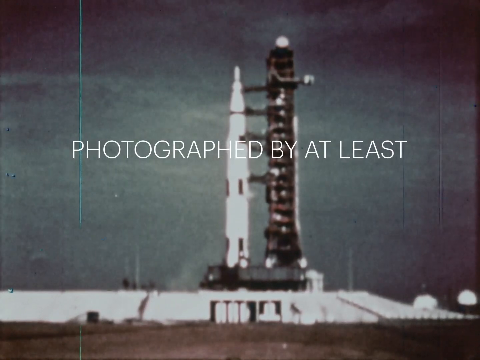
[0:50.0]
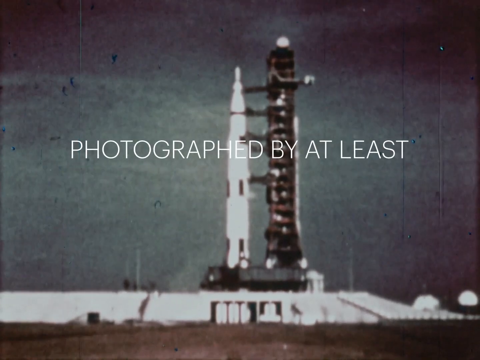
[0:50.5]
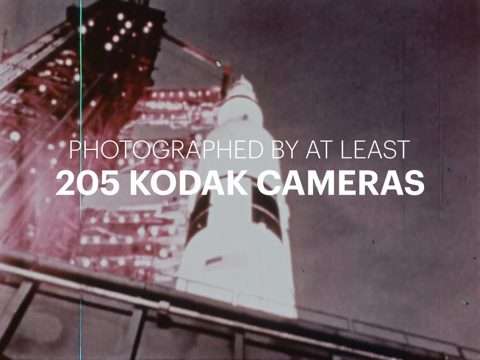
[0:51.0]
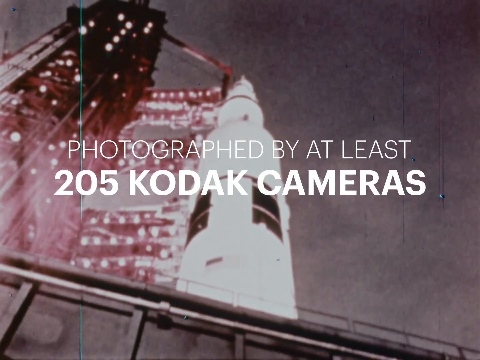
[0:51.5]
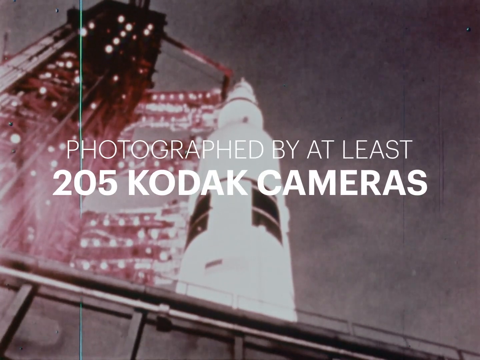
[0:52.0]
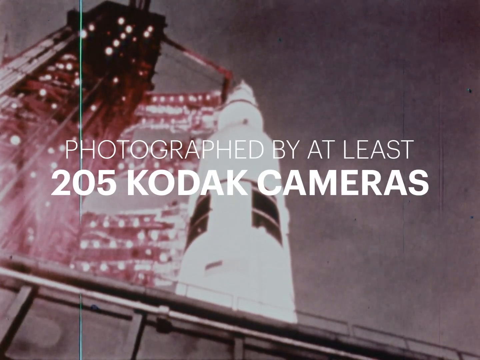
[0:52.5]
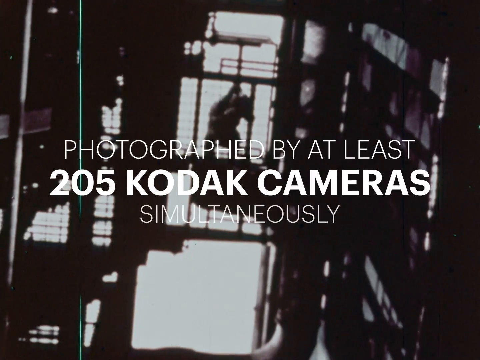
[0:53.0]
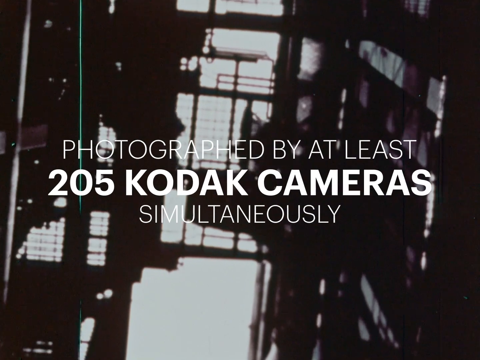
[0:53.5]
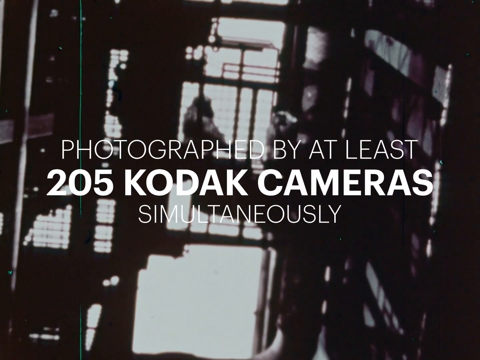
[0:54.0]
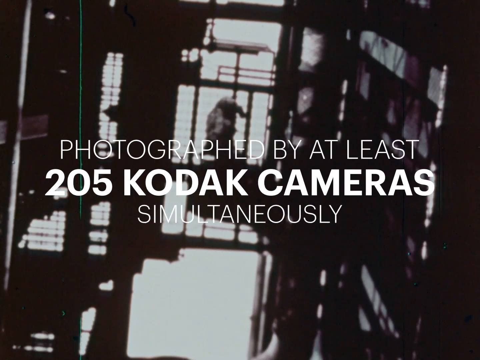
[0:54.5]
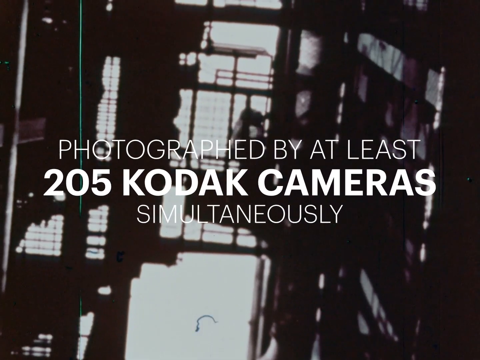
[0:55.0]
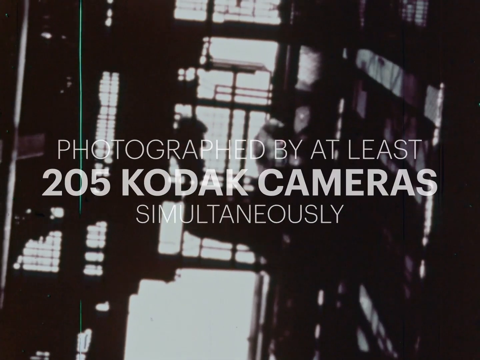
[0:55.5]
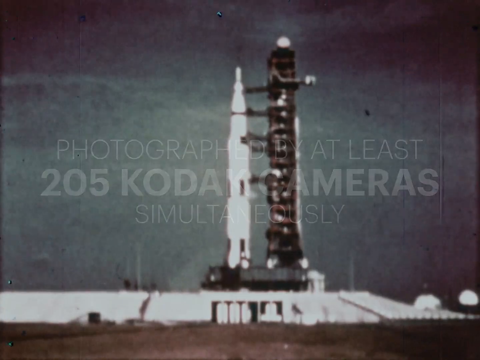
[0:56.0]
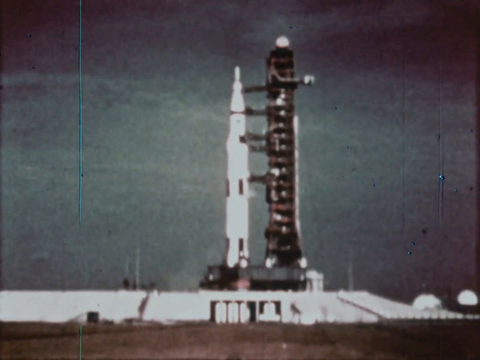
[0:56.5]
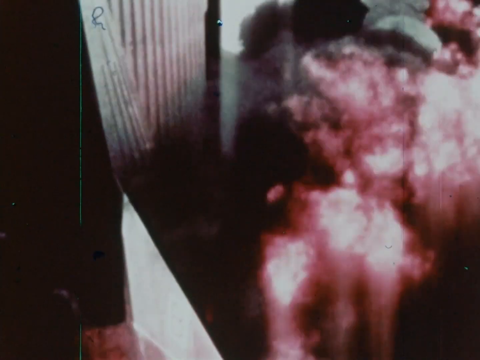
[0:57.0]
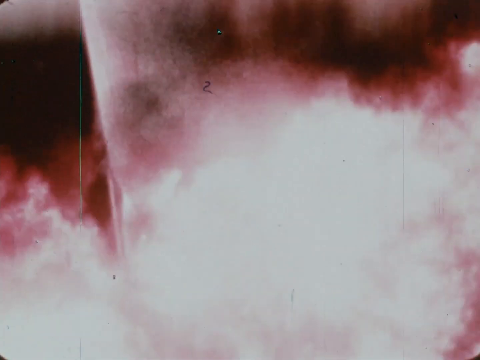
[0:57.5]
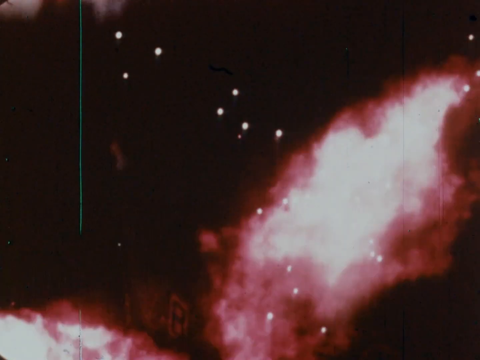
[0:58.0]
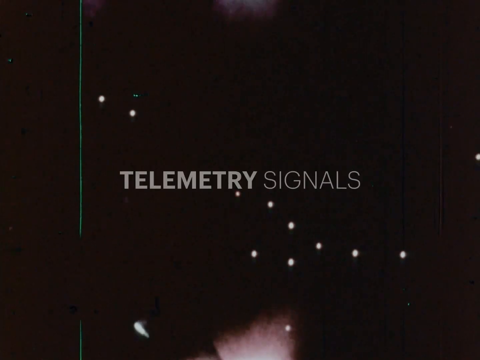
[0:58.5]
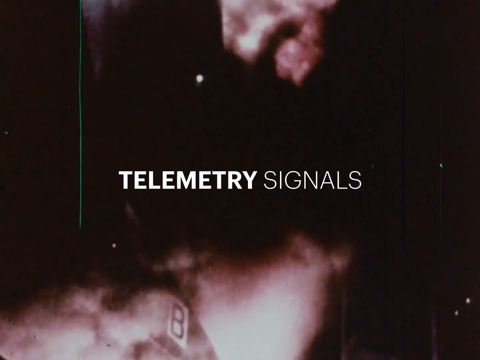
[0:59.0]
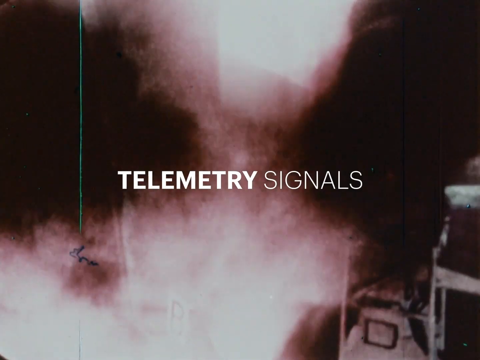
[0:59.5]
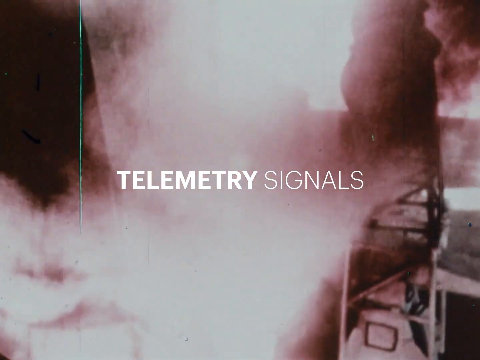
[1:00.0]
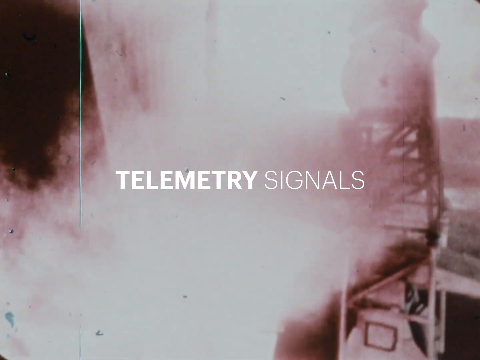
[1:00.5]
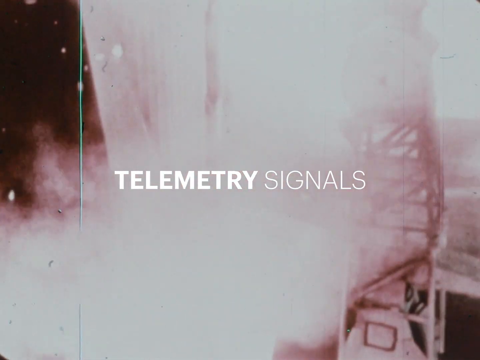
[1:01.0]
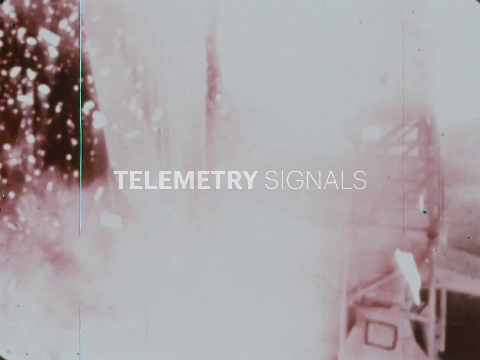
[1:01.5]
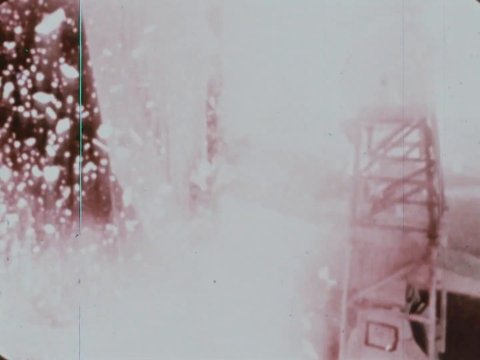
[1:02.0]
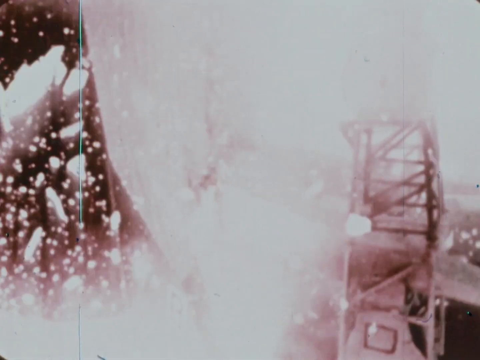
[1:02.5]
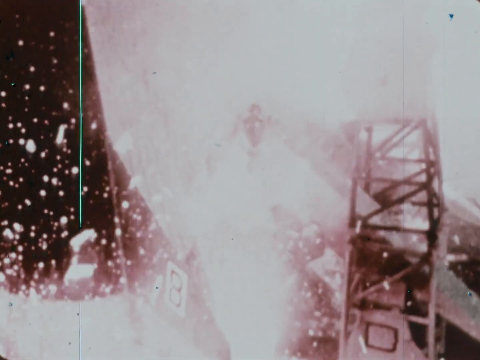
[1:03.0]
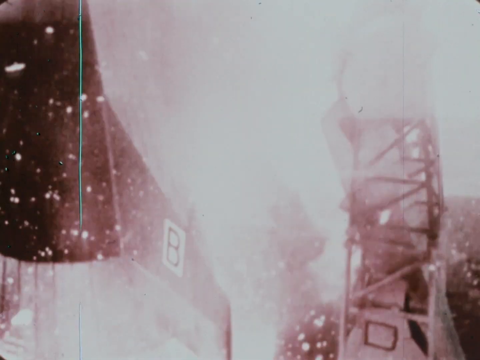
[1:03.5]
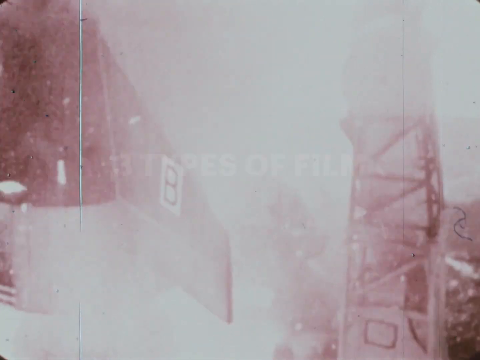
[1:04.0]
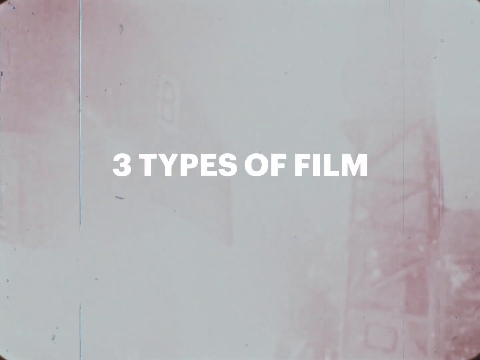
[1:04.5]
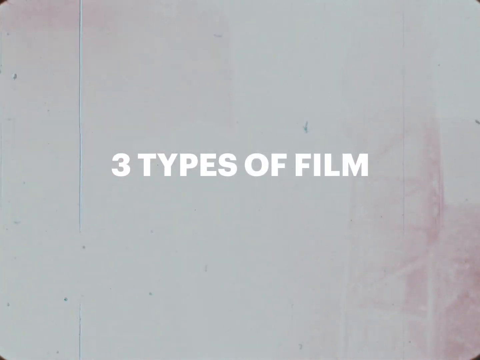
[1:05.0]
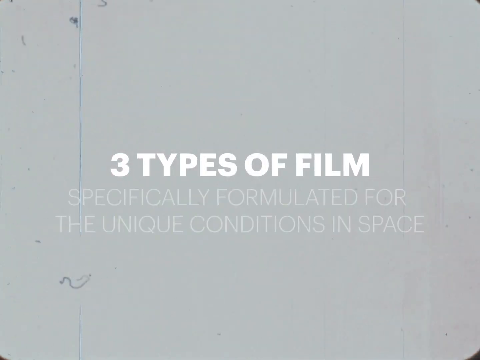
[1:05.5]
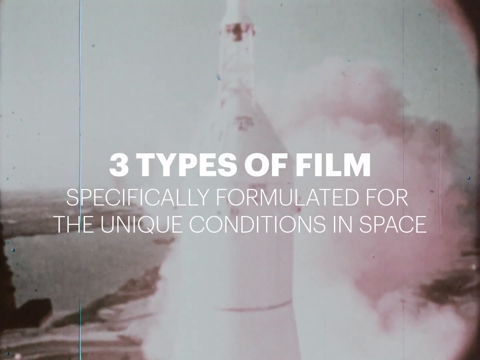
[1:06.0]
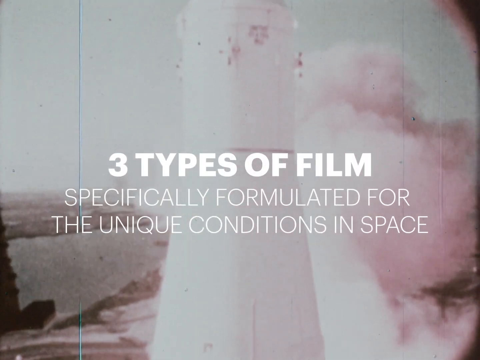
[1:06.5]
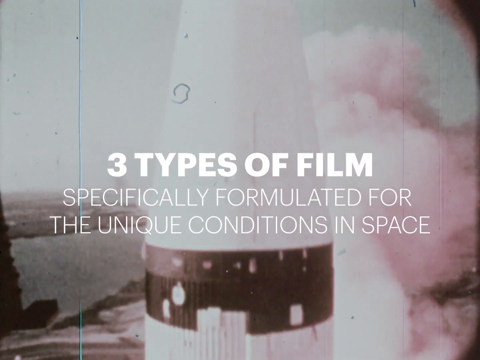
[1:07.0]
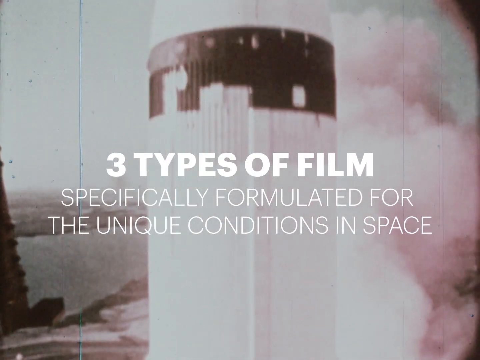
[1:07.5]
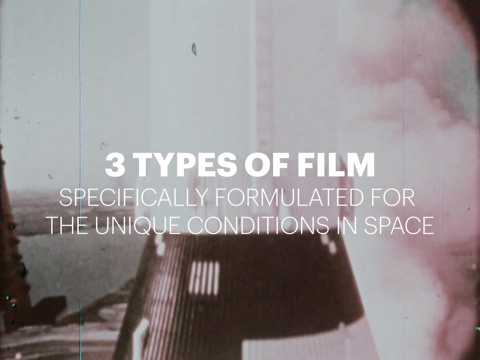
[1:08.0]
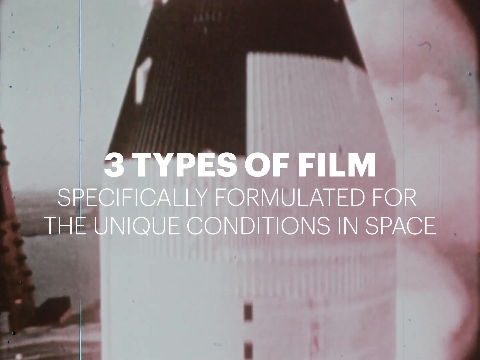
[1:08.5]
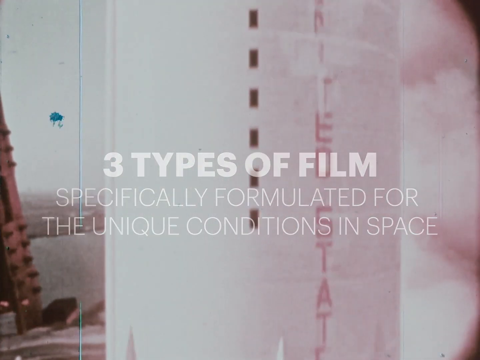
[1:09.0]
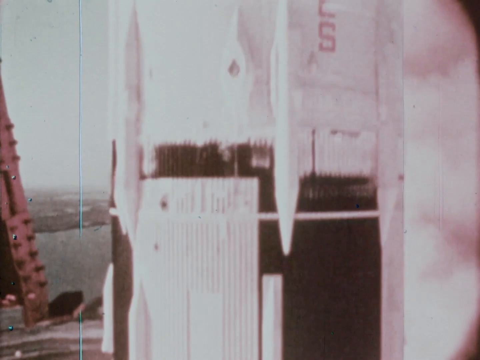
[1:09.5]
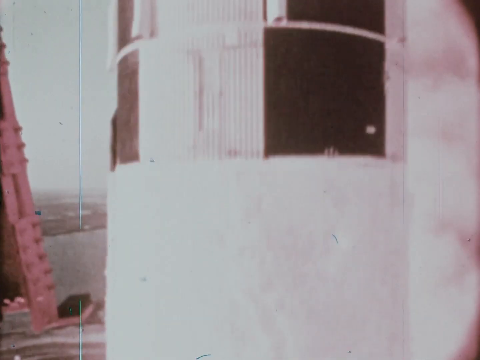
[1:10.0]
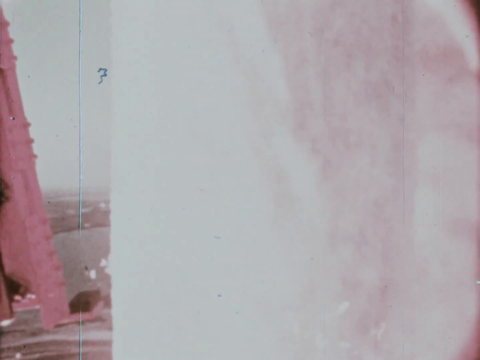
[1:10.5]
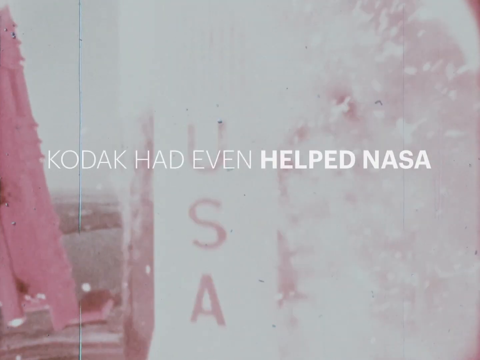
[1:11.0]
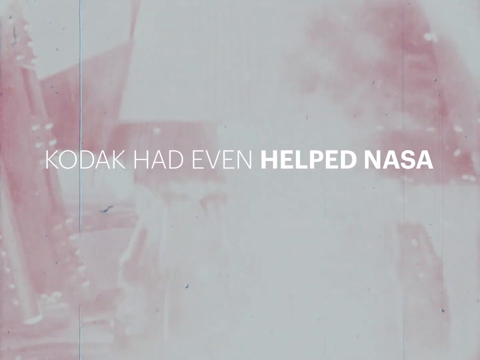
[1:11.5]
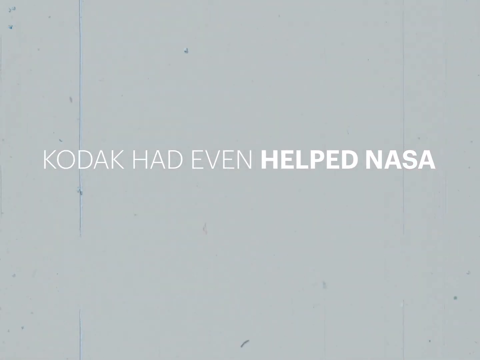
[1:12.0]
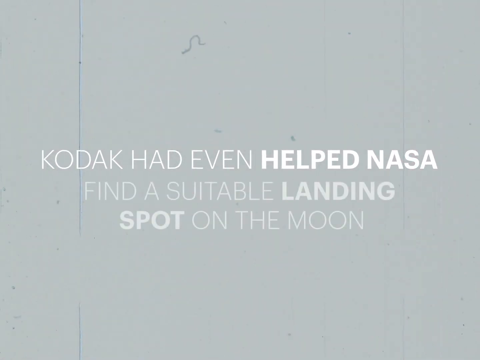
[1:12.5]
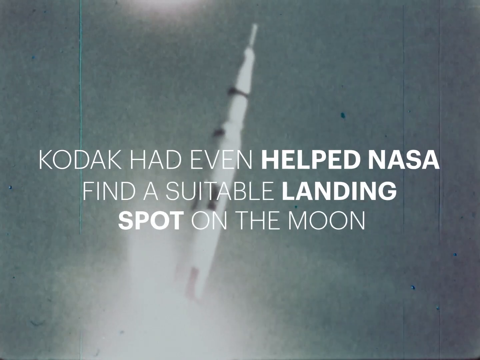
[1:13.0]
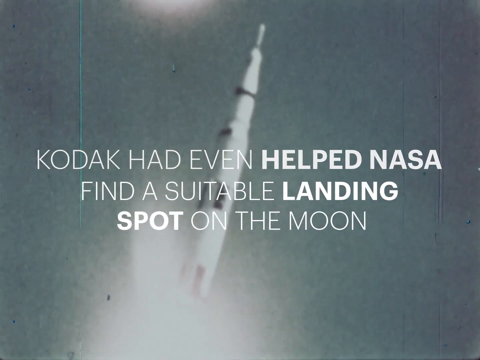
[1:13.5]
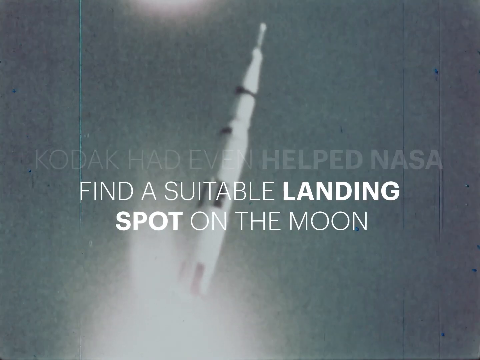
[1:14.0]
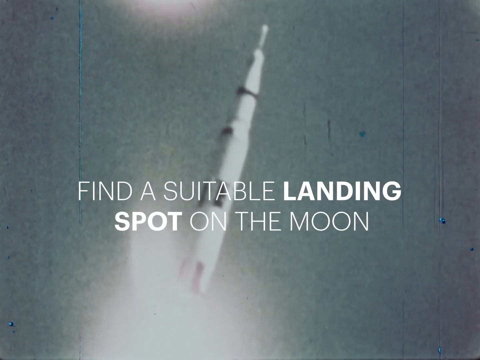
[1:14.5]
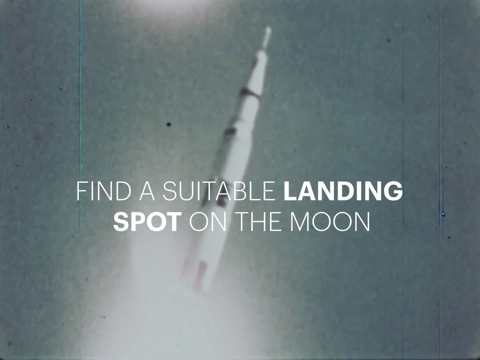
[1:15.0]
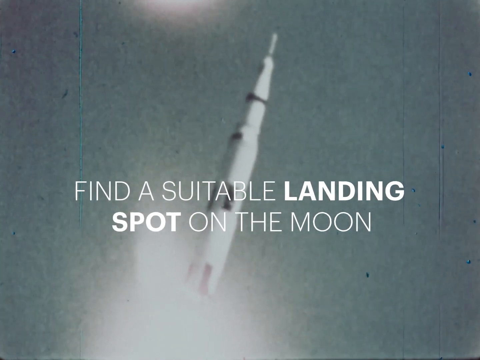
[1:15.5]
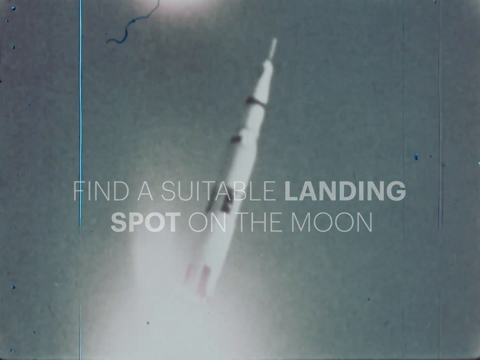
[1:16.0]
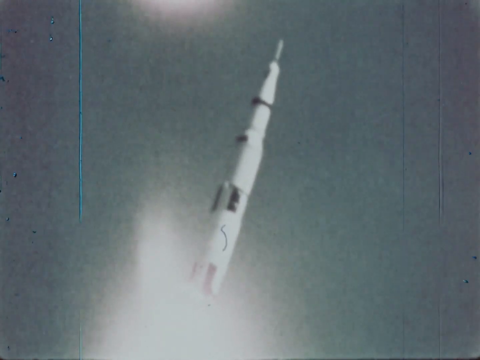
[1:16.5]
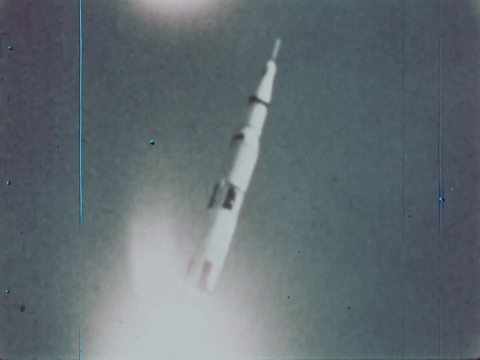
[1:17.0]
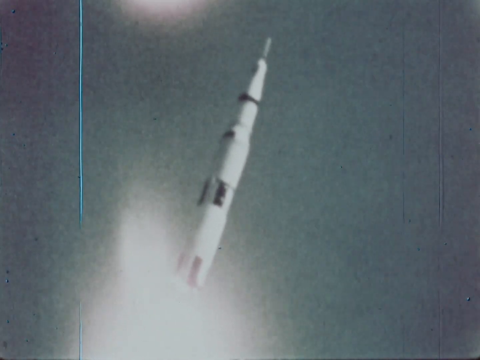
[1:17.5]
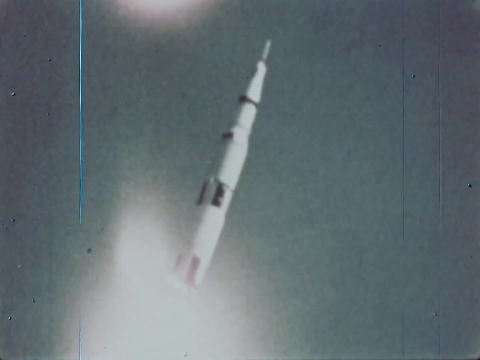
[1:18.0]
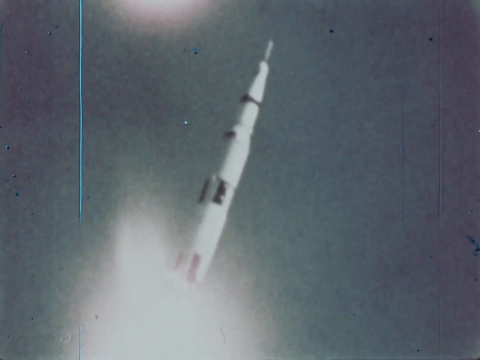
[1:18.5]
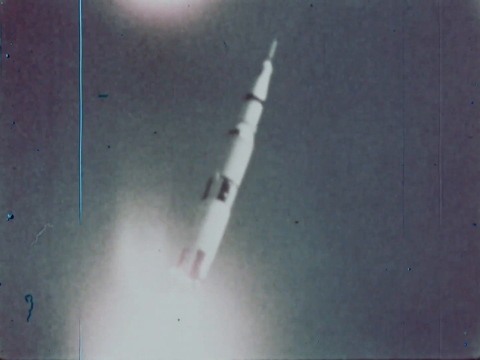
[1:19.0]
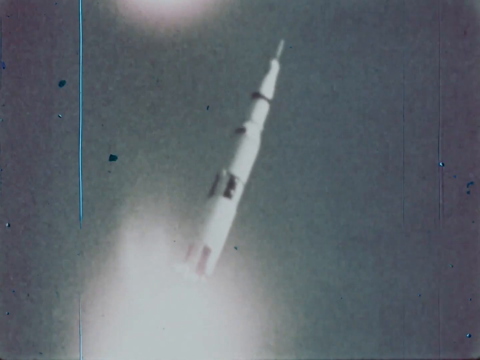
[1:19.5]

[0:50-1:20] A far view shows the spaceship getting ready for takeoff, with text in the middle reading "photographed by at least 205 Kodak cameras." Short video clips show the astronauts loading up. A closer view shows the spaceship taking off, with several flames at its end. Words in the middle then read "telemetry signals. three types of film, specifically formulated for the unique conditions in space. Kodak had even helped NASA find a suitable landing spot on the moon." The spaceship, long in shape, is then shown taking off and traveling at a very high speed toward outer space. The video is in a square shape, and there are no animals in it.